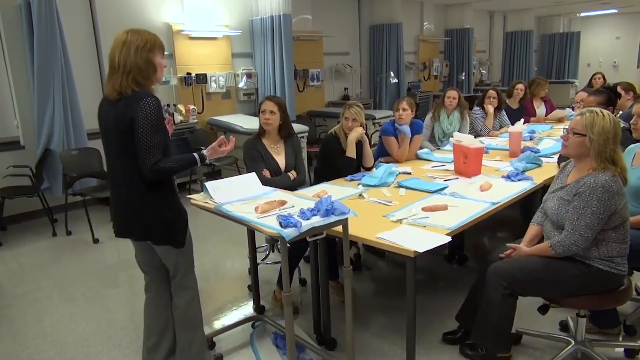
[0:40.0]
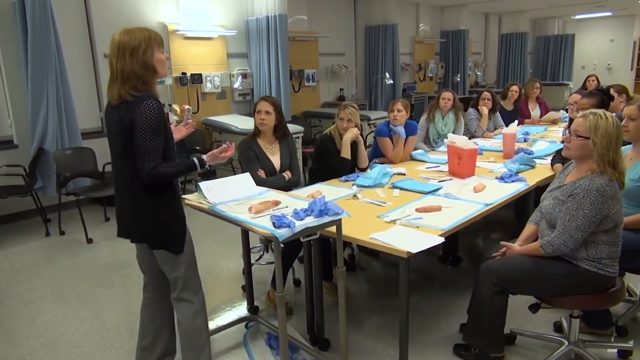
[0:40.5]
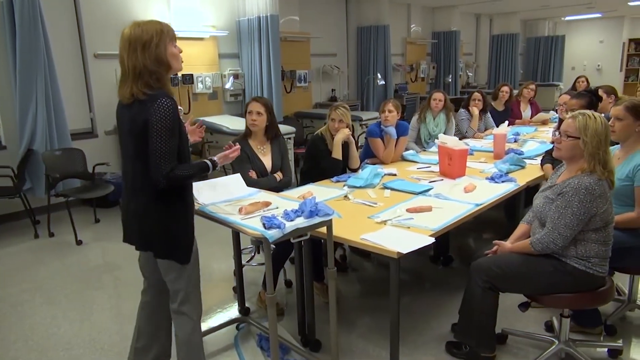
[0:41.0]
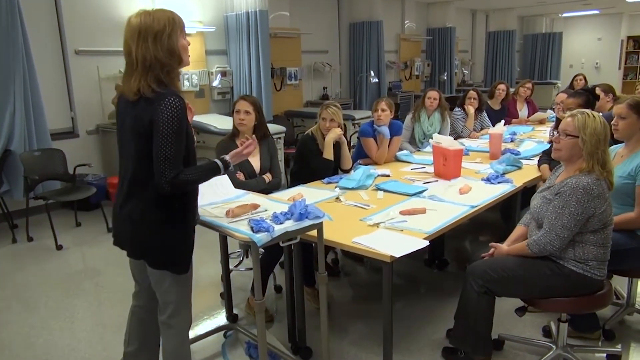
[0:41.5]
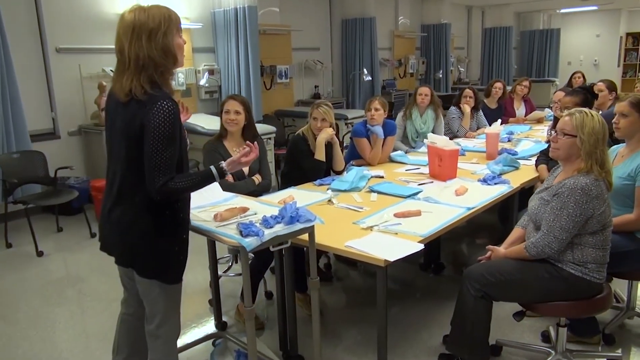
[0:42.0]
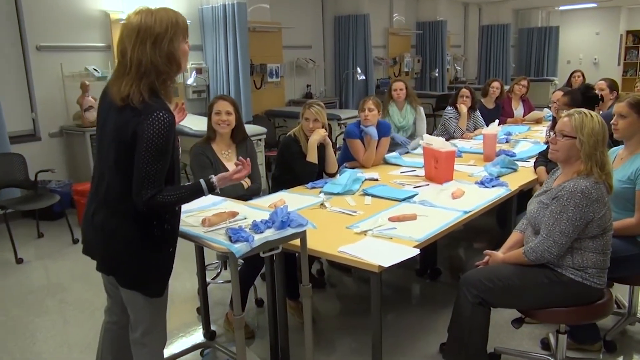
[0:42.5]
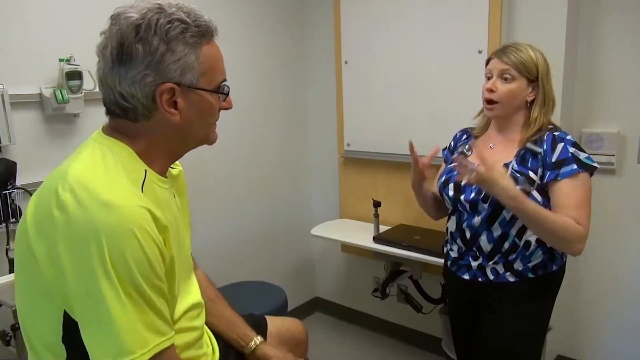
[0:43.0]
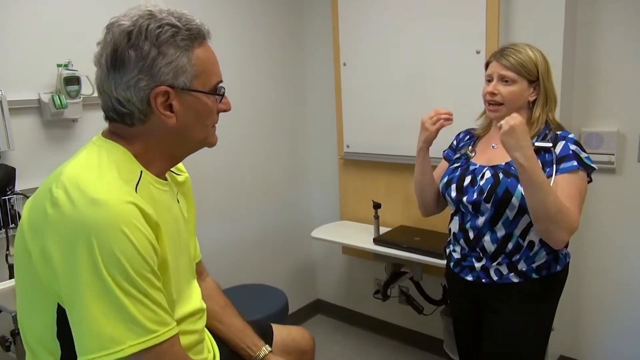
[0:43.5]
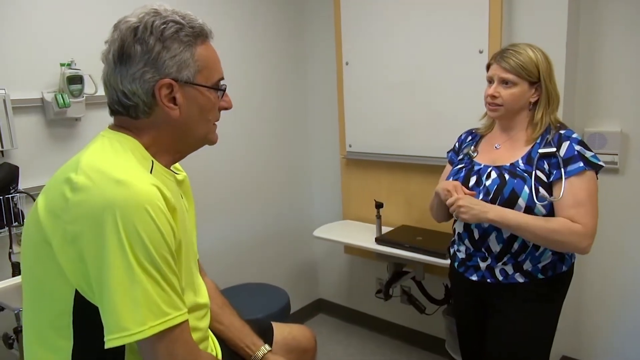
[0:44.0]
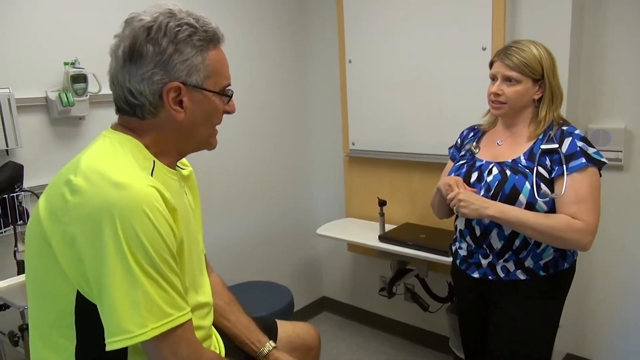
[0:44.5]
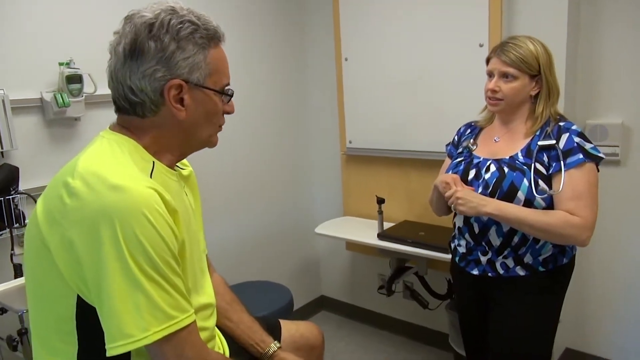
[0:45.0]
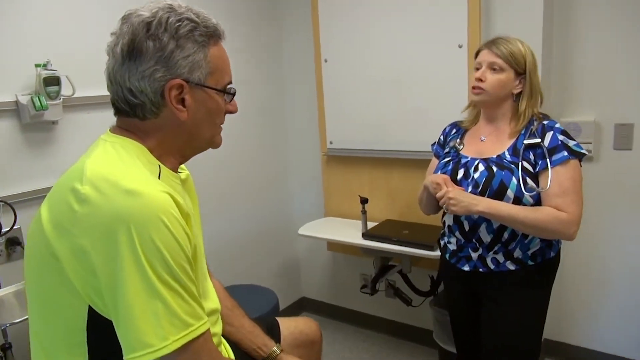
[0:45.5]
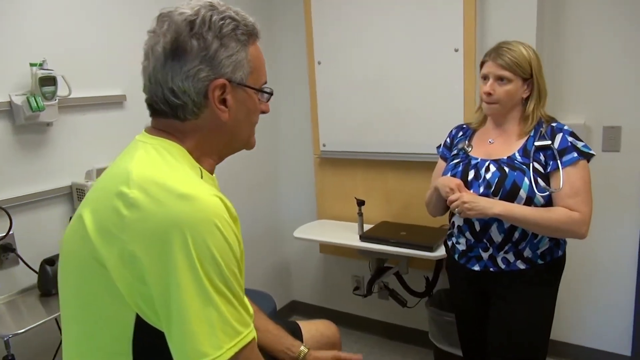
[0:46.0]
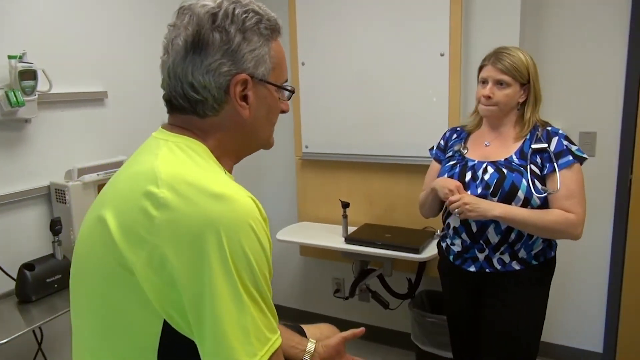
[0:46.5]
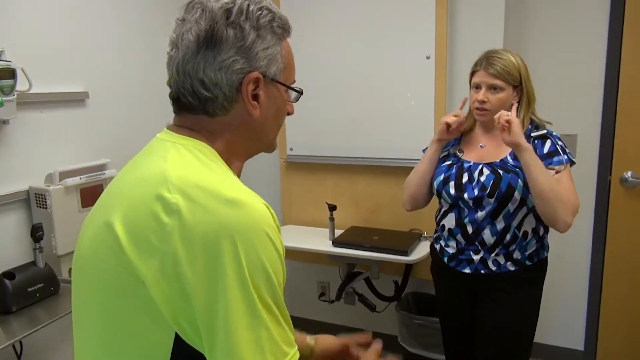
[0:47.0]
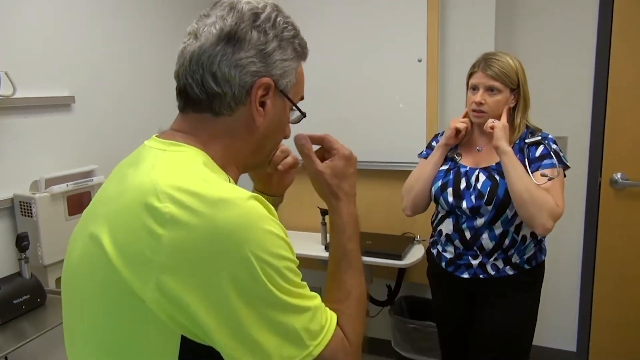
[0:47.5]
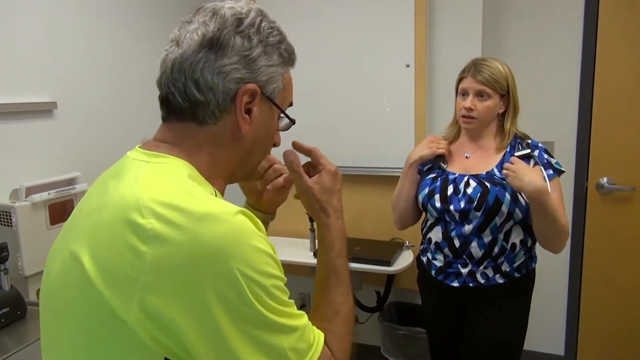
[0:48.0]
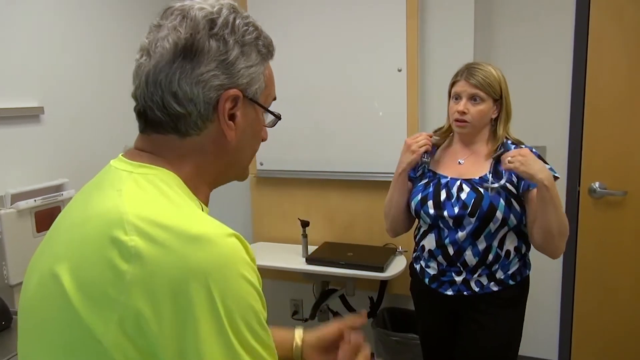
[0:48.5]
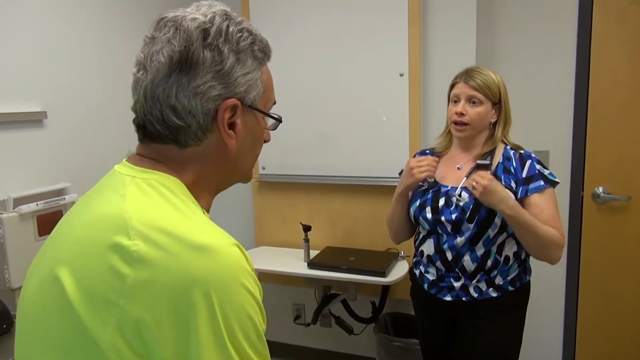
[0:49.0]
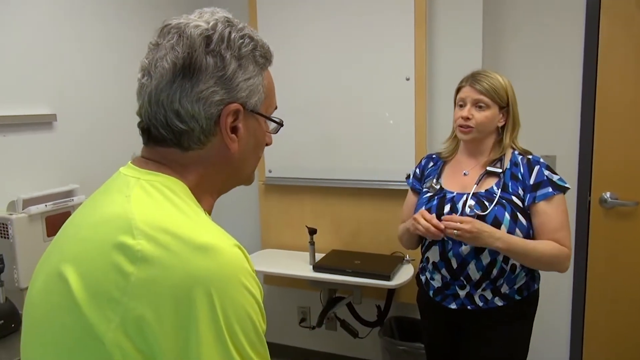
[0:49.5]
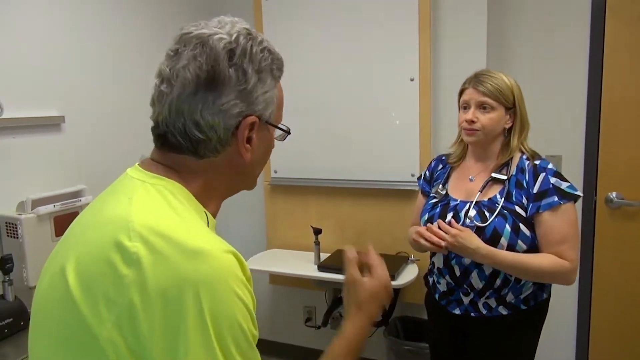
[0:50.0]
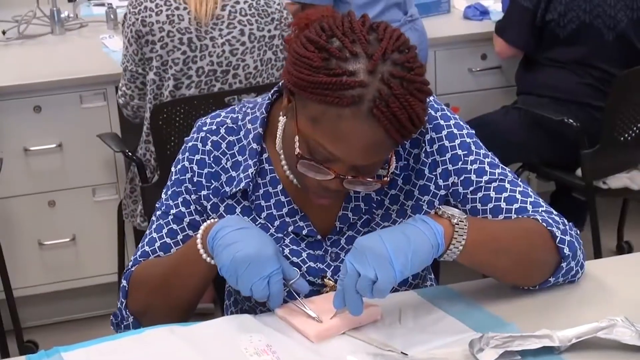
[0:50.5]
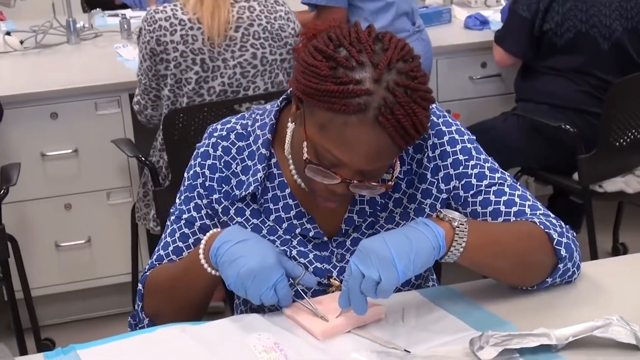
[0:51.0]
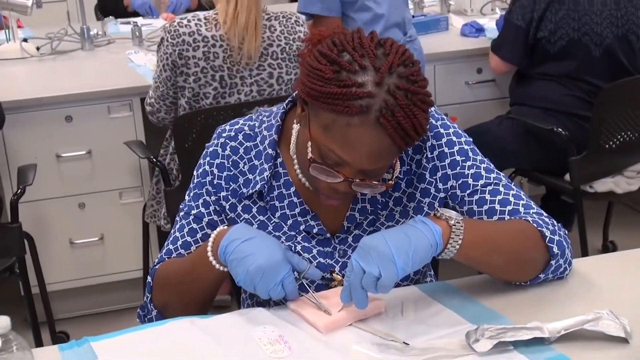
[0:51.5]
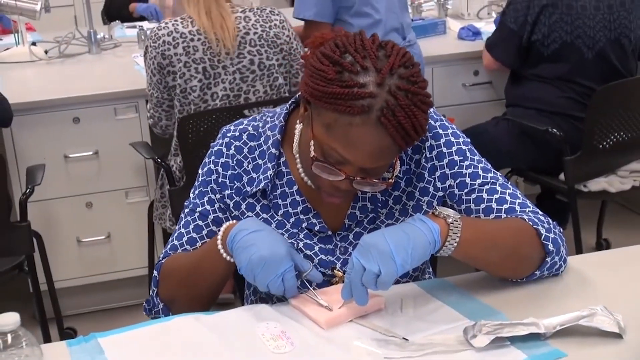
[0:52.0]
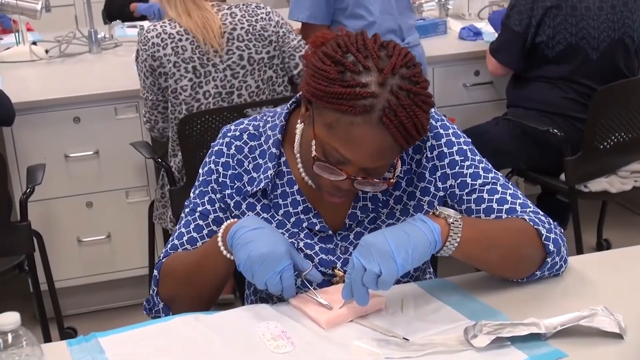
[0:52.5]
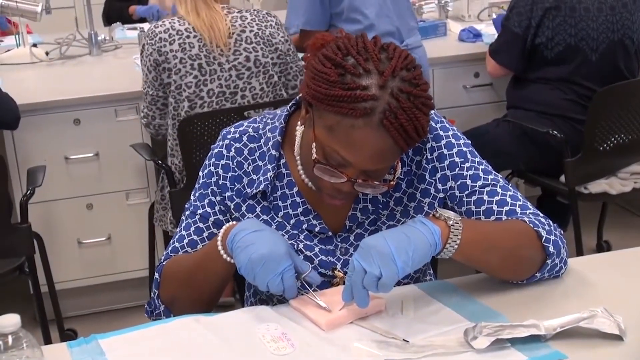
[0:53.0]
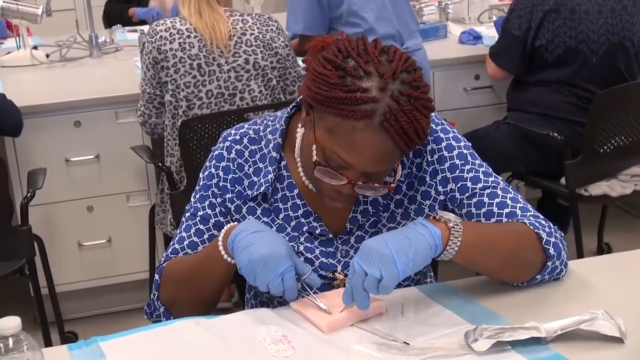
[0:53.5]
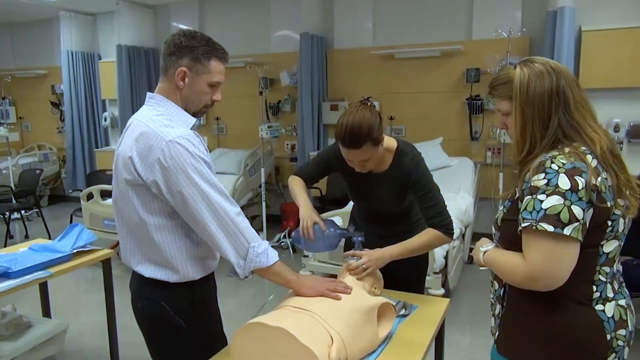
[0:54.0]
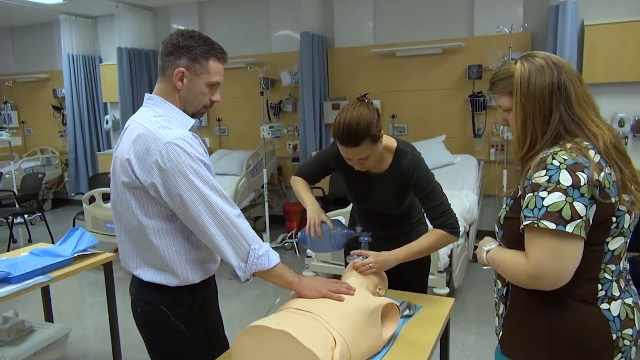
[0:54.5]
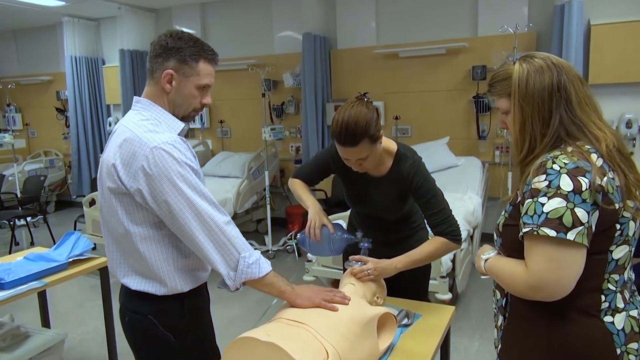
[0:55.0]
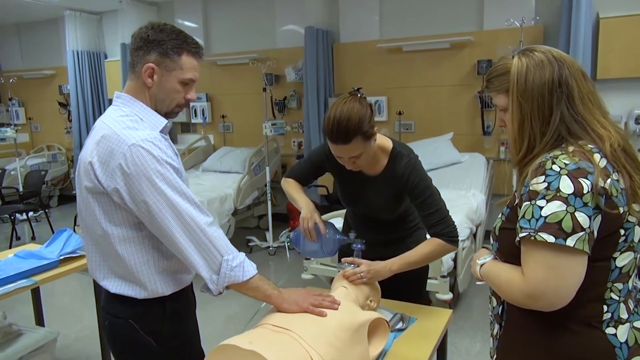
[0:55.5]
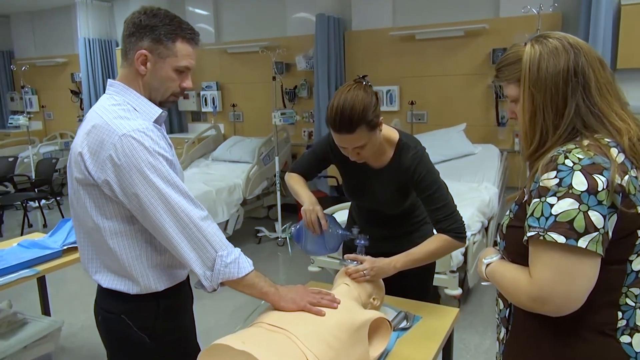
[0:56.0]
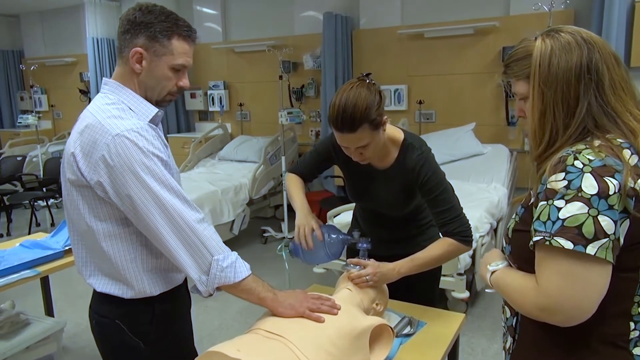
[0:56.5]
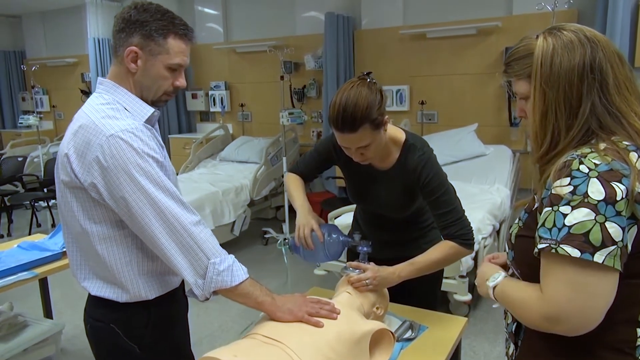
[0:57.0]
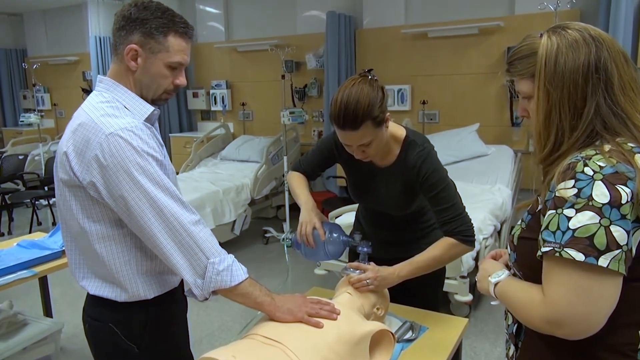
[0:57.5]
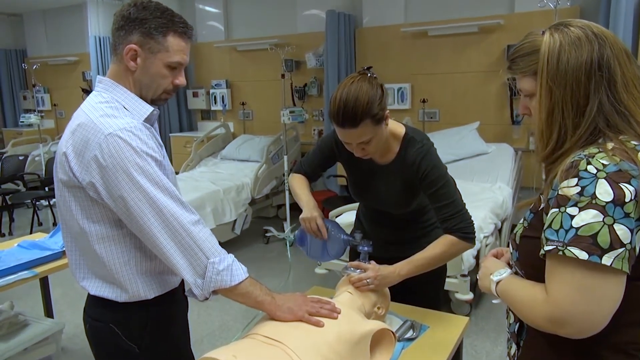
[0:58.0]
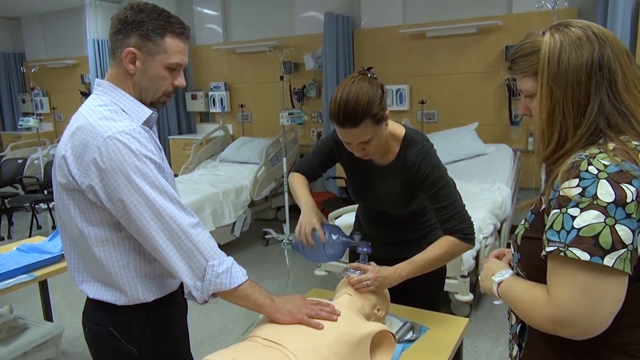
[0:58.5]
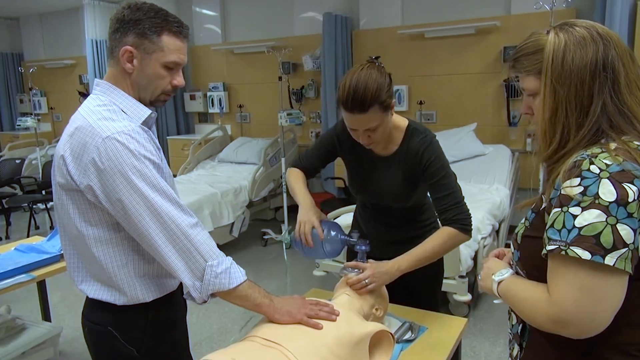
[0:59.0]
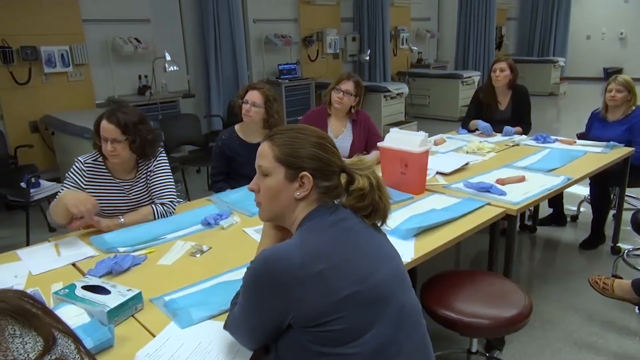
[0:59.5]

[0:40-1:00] A woman with brown hair moves her hands as she speaks, kind of informing many people at tables. On the tables are kind of red buckets and all sorts of tools, along with some kind of blue mats, and many women sit at the table. The setting appears to be clinic-like, and some of the nurses wear blue latex gloves. The scene switches to a man in a yellow shirt speaking to a woman in a blue shirt; the man seems to be discussing something. Next, a woman in a blue shirt and blue latex gloves works on something. A man and two women then kind of work on something with a medical doll, attempting to pump the doll's mouth with air. The scene then returns to the table, where many people sit listening to the woman speak.